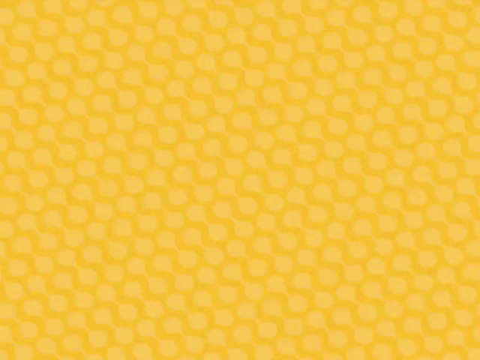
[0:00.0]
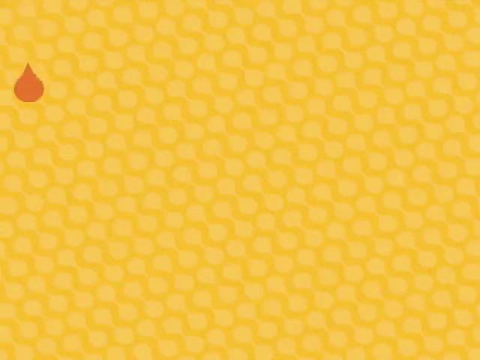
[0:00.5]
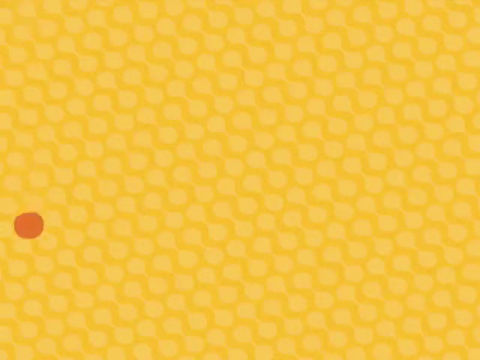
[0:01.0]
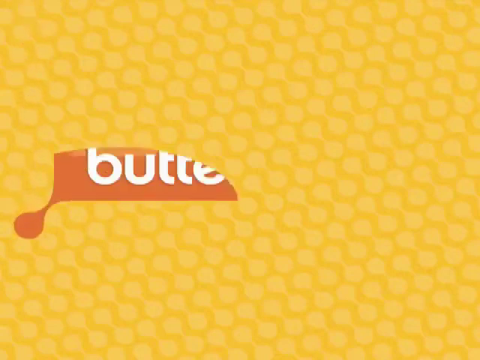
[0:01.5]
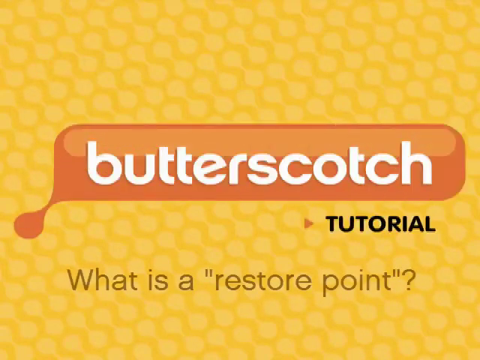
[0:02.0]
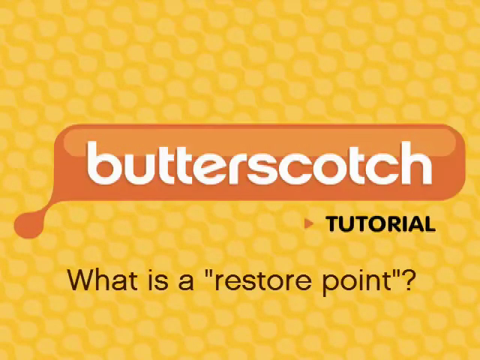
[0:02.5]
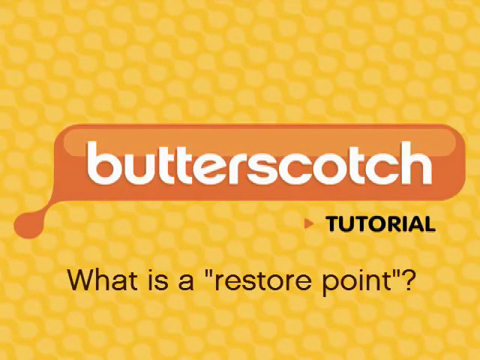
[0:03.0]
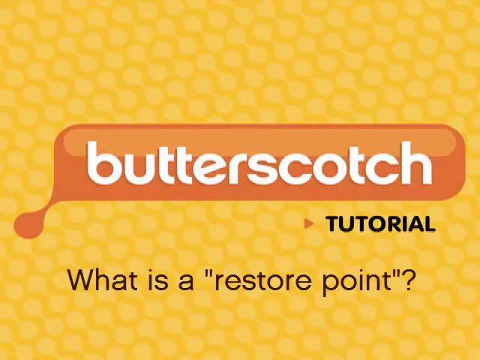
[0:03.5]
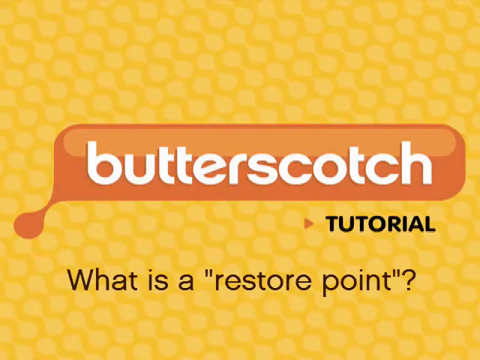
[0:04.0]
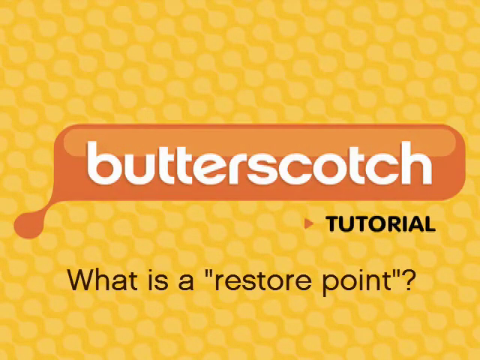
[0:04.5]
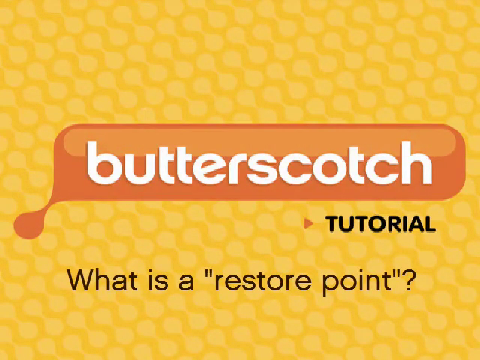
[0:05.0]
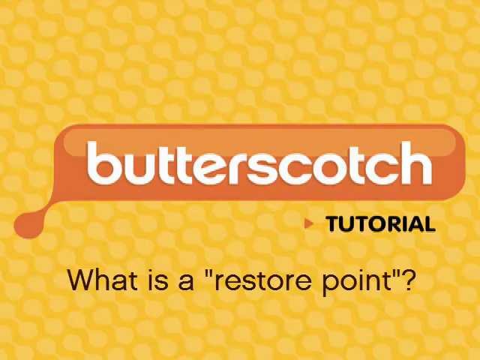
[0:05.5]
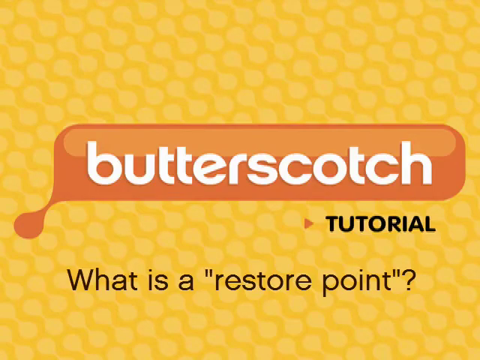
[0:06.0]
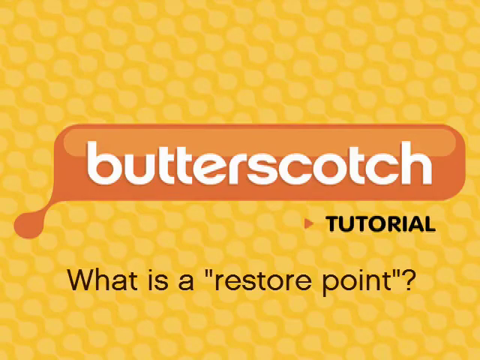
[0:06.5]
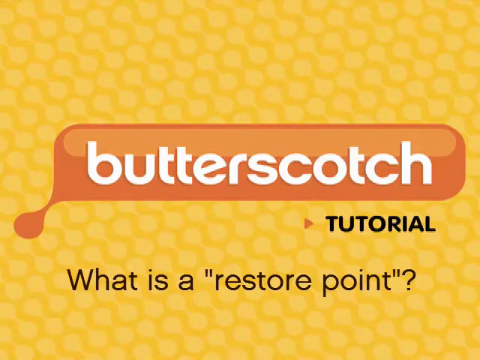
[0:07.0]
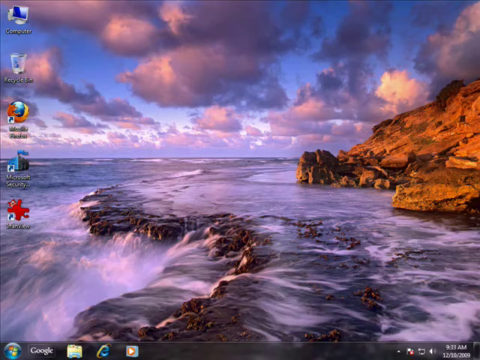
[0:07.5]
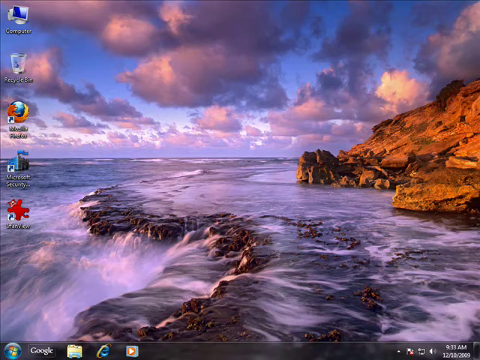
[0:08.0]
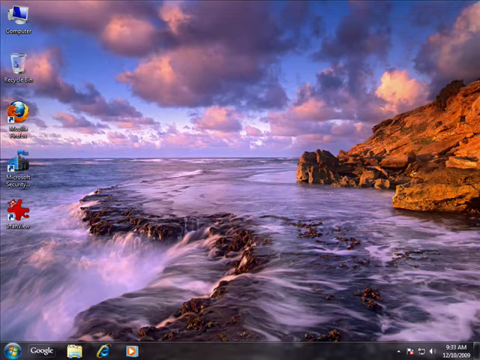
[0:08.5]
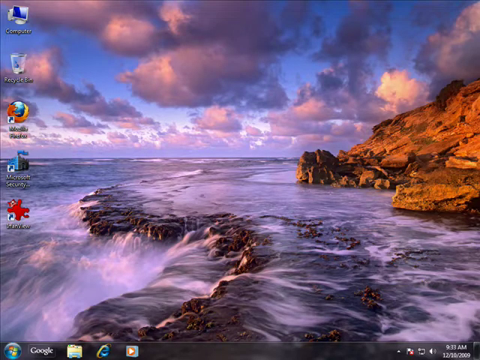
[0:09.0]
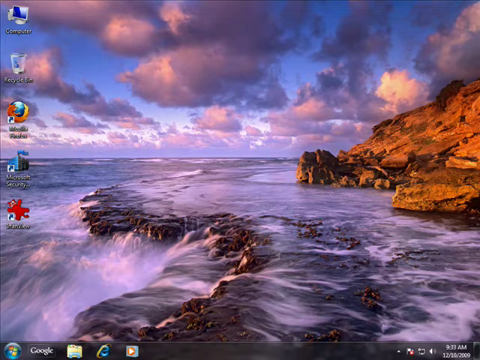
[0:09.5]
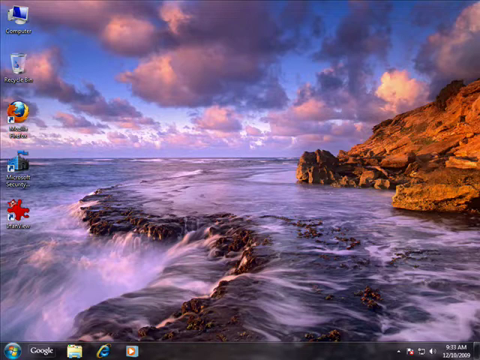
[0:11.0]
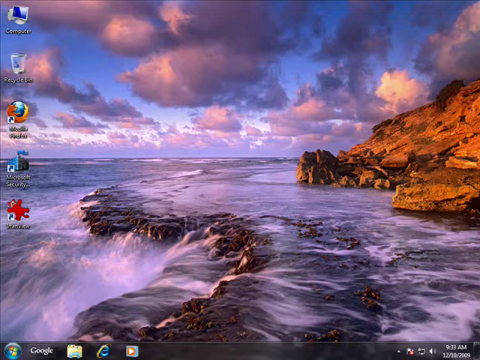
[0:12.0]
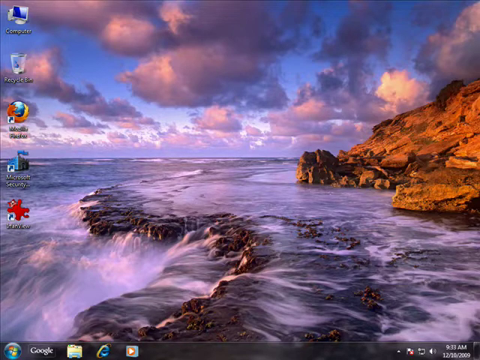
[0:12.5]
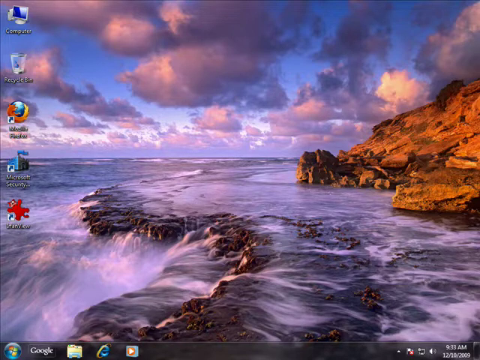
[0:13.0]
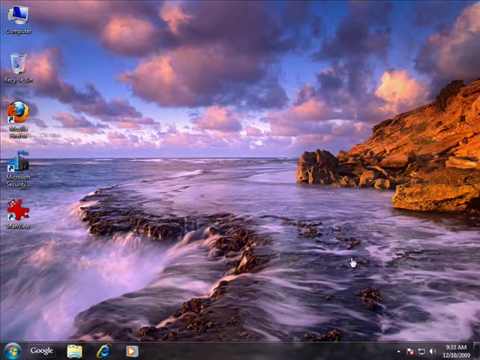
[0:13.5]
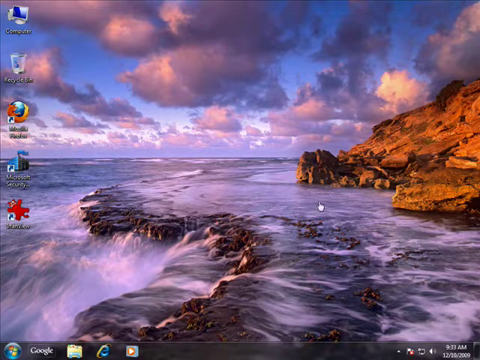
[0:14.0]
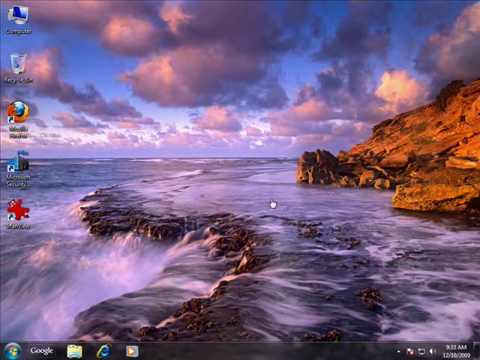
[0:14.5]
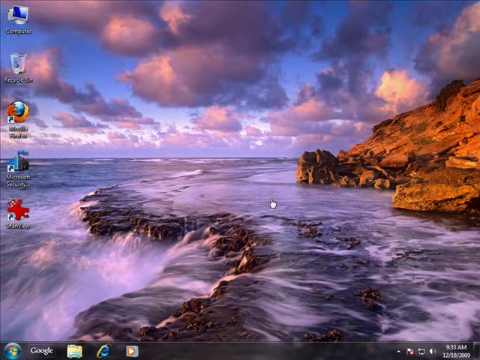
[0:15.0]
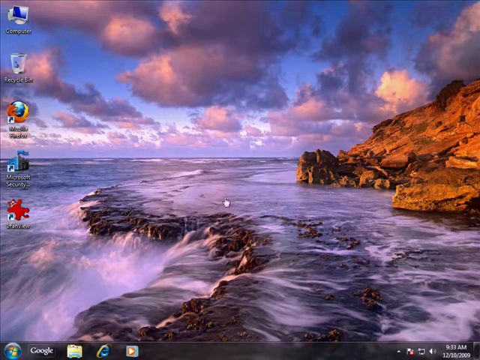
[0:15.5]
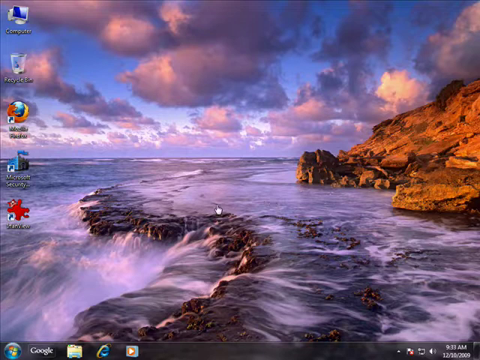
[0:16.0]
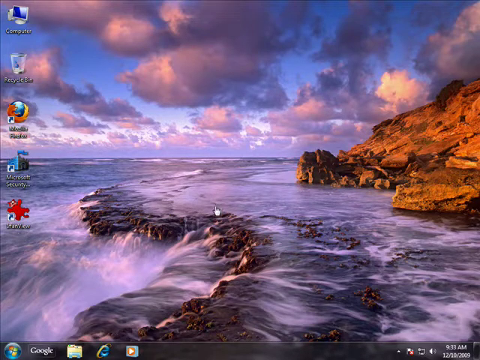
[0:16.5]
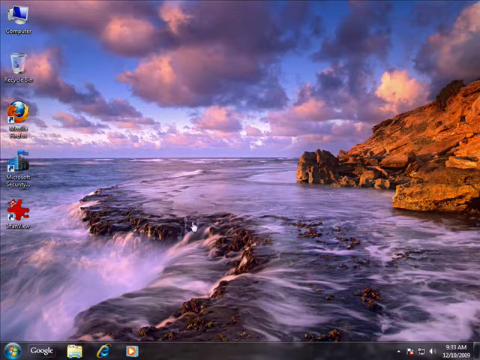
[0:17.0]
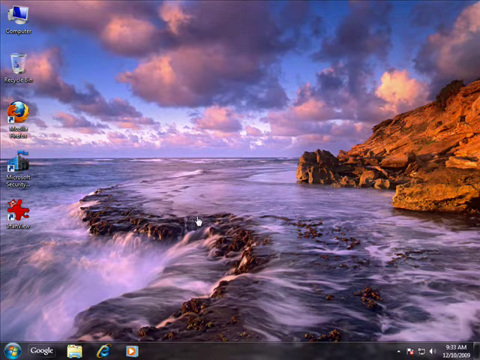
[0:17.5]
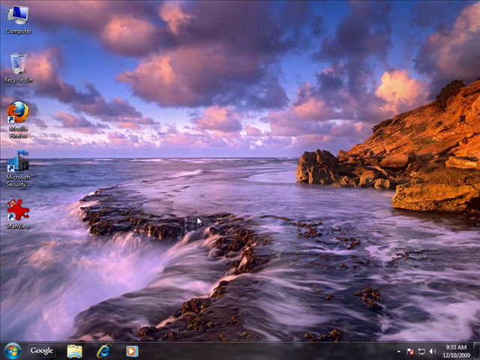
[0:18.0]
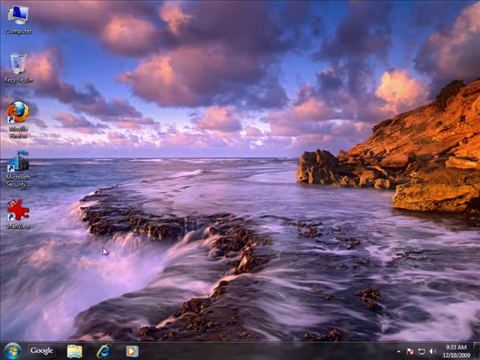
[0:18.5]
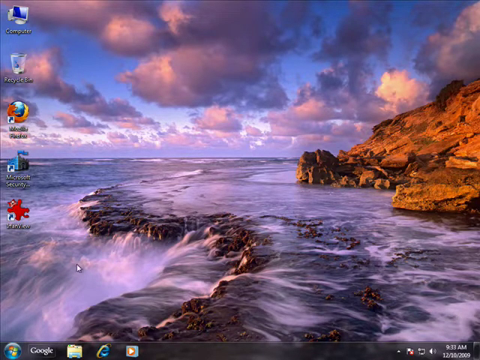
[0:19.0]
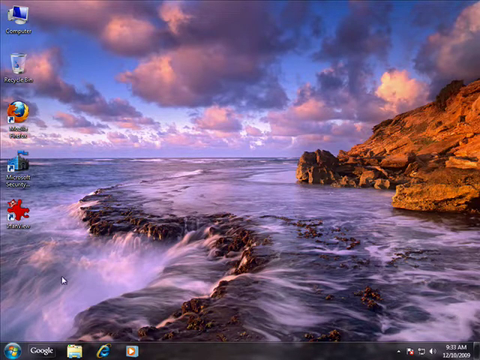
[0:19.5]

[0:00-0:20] A title asks "what is a restore point" on a completely yellow screen with the orange and white Butterscotch logo in the middle. A shared desktop screen then appears, showing a canyon and a waterfall flowing down. On the left-hand side are icons for a computer or Mozilla Firefox and various other apps such as Recycle Bin and Microsoft Security. The mouse cursor moves over different areas of the desktop as part of a tutorial.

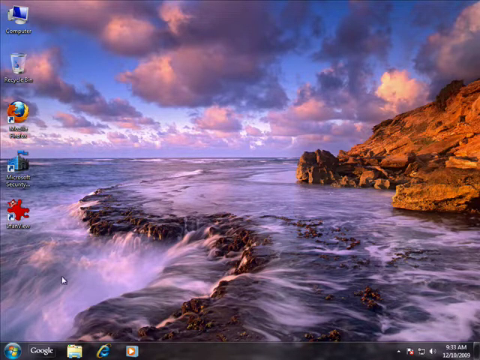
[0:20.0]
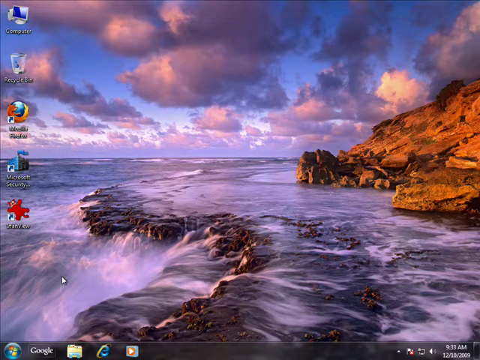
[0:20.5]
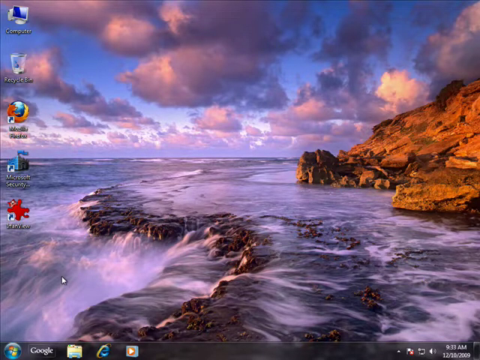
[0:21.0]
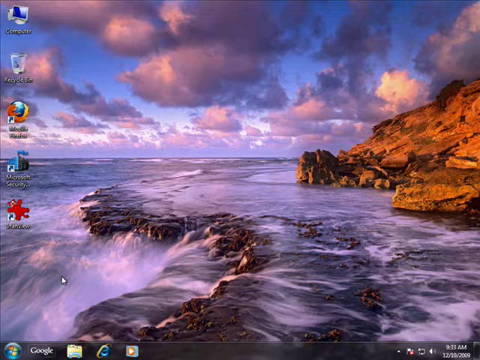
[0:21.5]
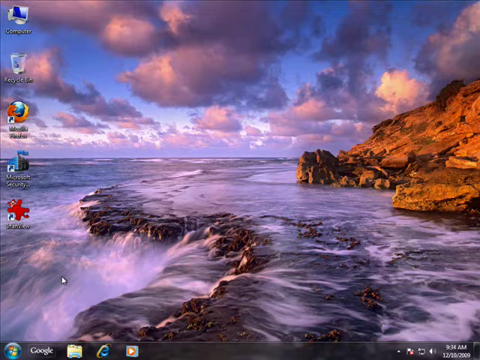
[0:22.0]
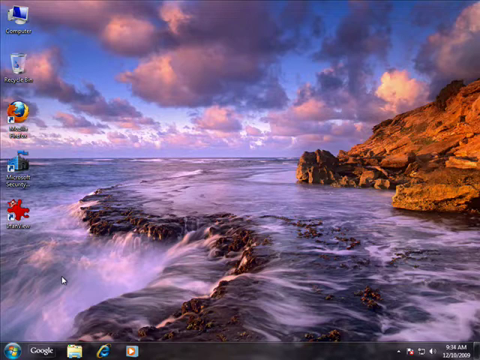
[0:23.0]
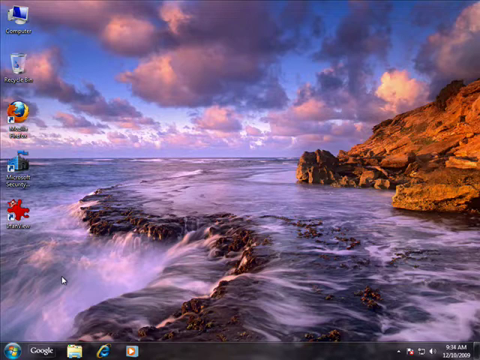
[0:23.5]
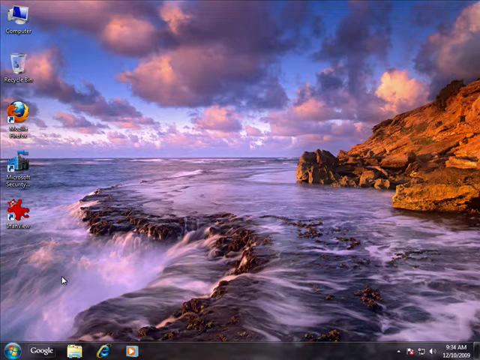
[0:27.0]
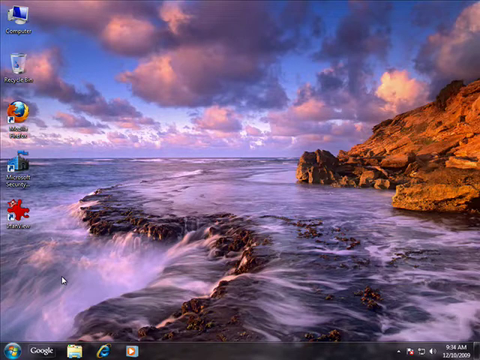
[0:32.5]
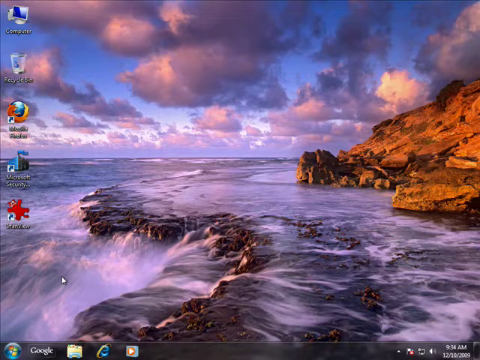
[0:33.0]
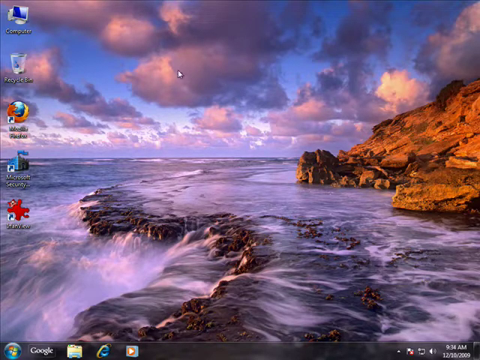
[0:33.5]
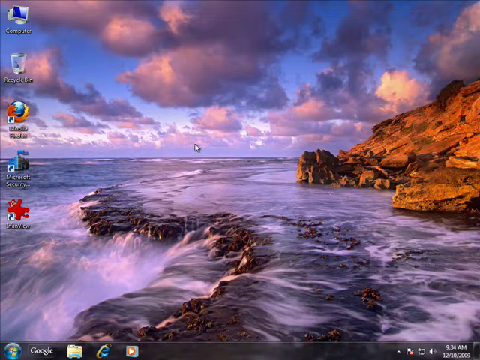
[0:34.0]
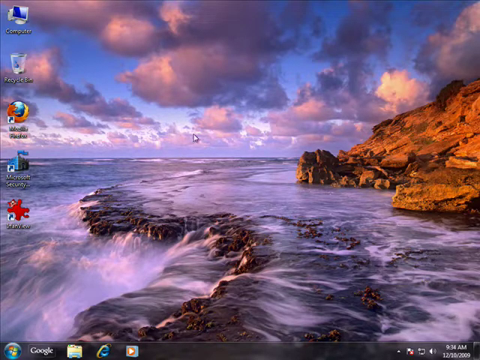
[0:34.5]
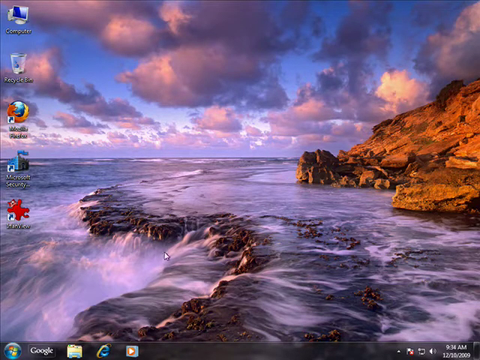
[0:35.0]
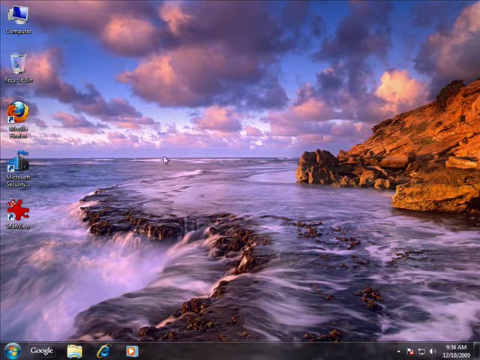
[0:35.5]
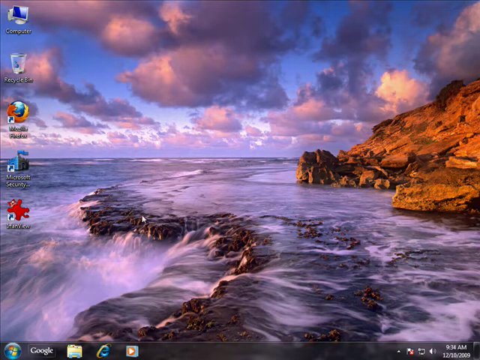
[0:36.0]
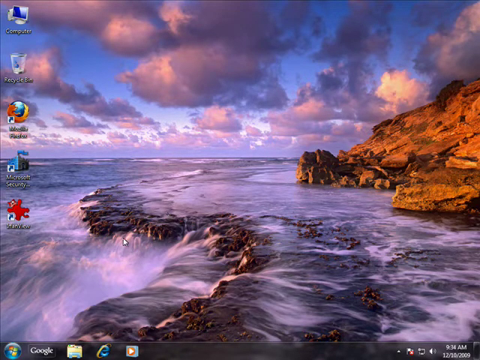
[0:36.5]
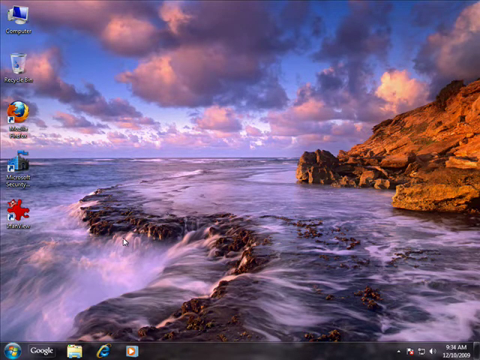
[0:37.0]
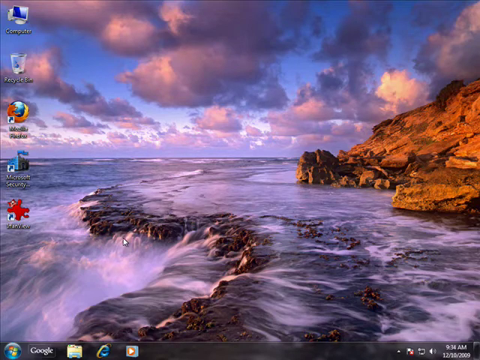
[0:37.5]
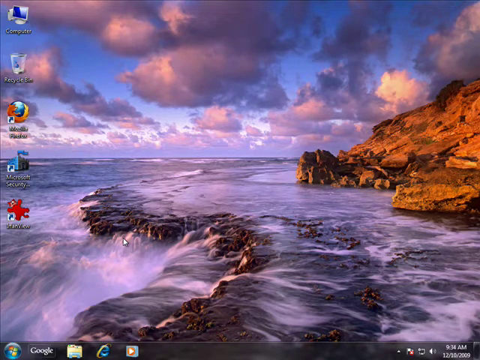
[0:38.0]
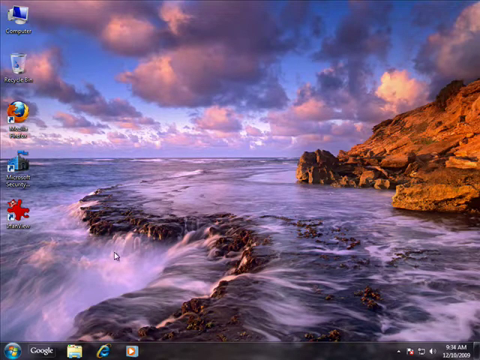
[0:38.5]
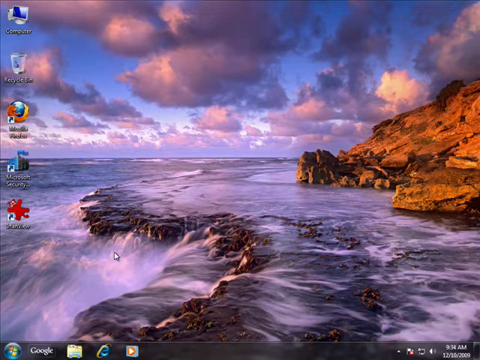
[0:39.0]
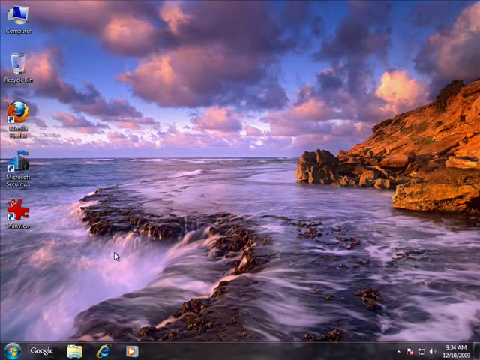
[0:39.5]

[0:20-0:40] The desktop background shows water flowing down a waterfall stream, with pieces of rock and clouds up in the sky that make the scene darker than a clear sky would. Brown canyons occupy the right-hand section of the desktop, contrasting with the blue of the water and the sky.